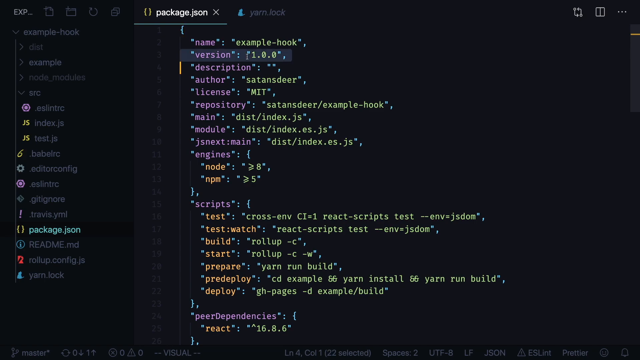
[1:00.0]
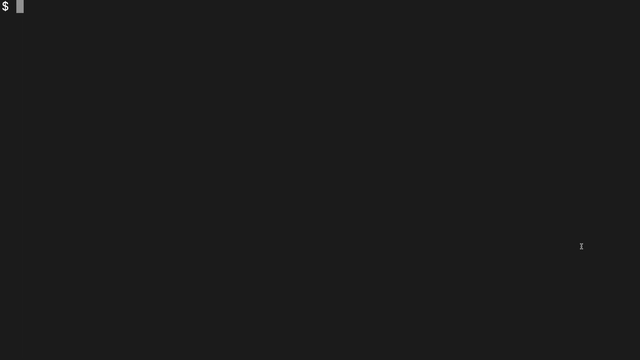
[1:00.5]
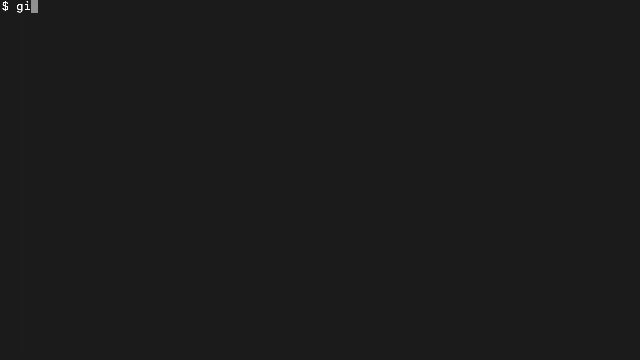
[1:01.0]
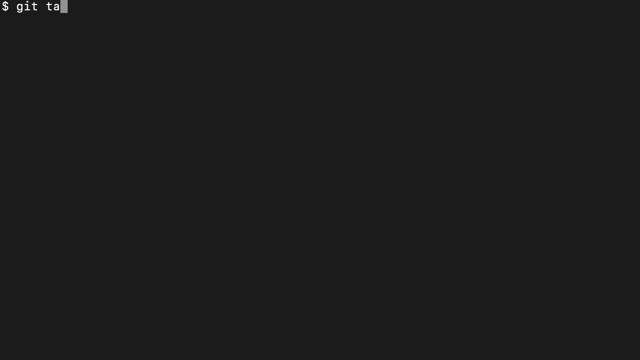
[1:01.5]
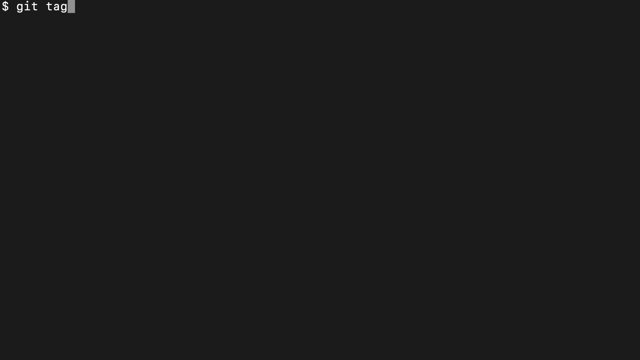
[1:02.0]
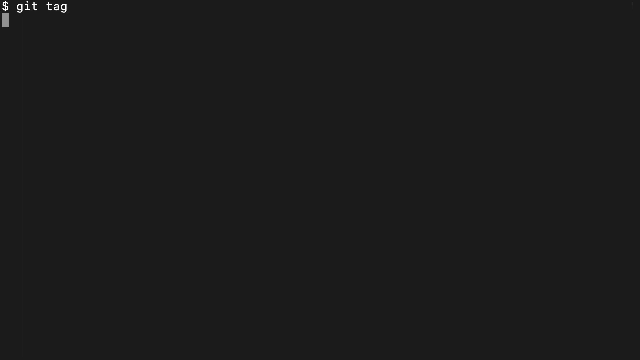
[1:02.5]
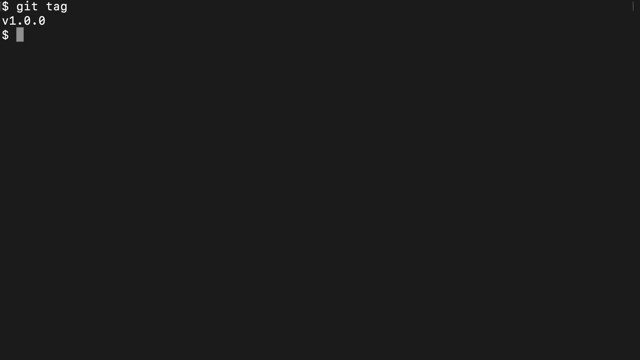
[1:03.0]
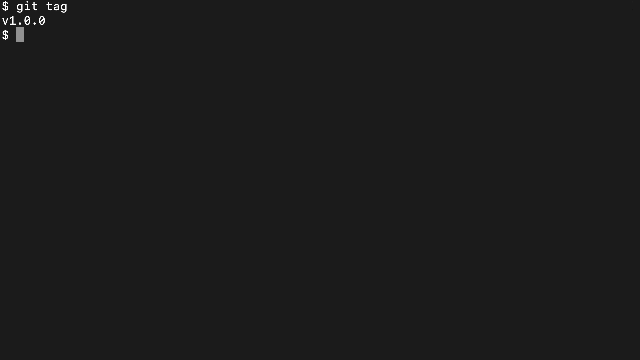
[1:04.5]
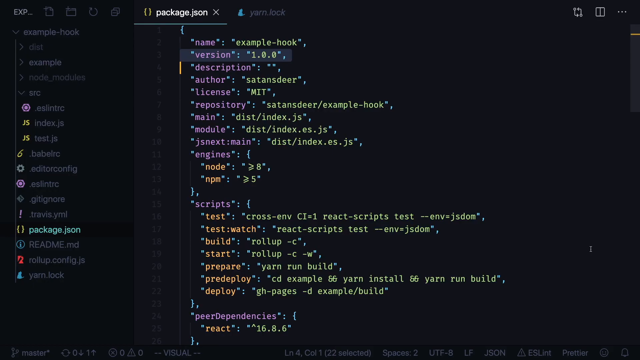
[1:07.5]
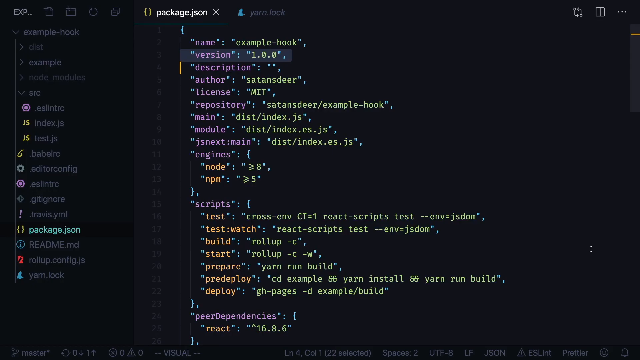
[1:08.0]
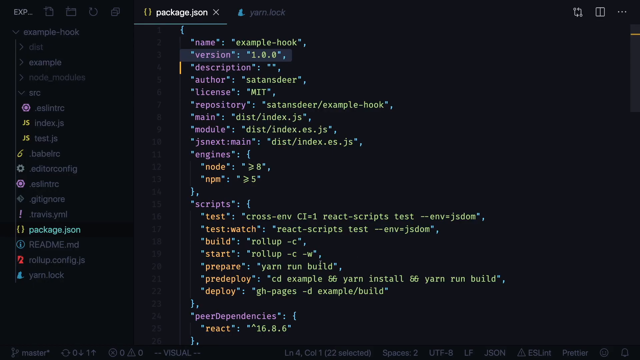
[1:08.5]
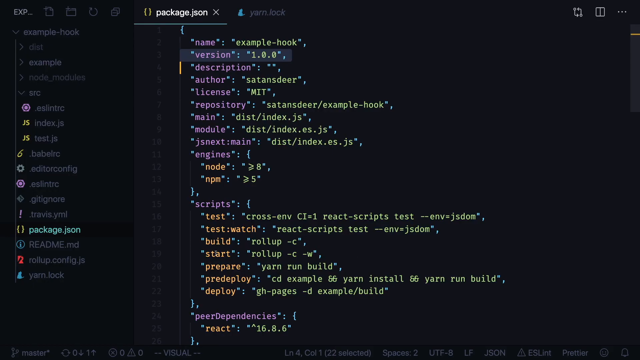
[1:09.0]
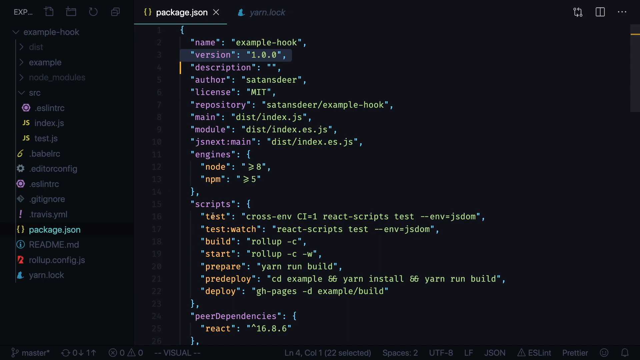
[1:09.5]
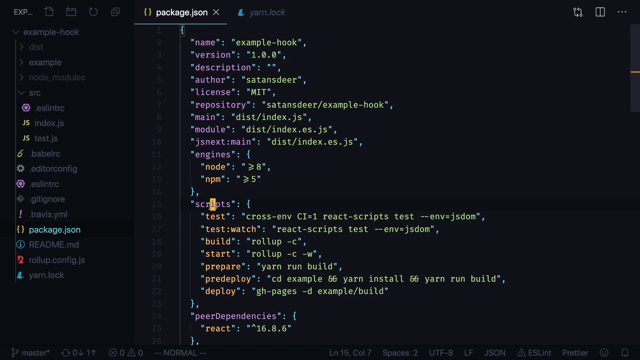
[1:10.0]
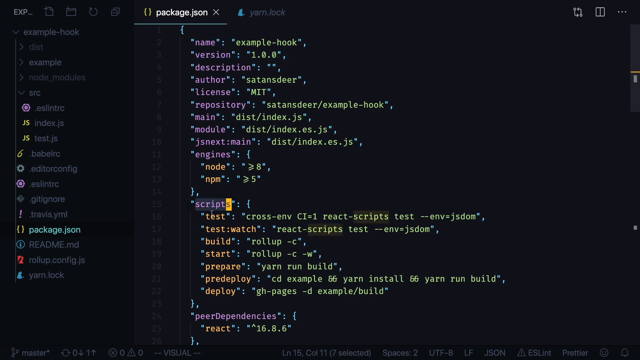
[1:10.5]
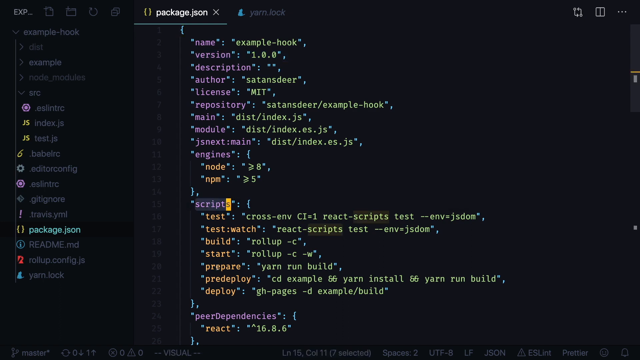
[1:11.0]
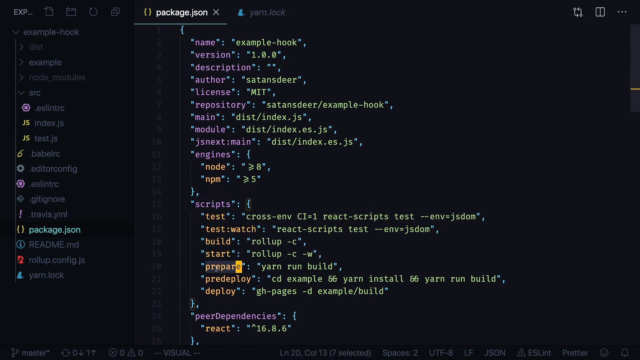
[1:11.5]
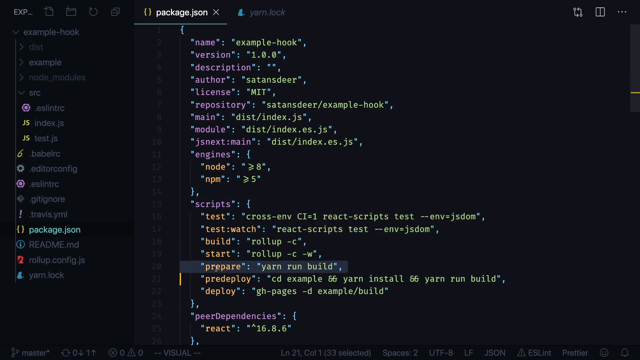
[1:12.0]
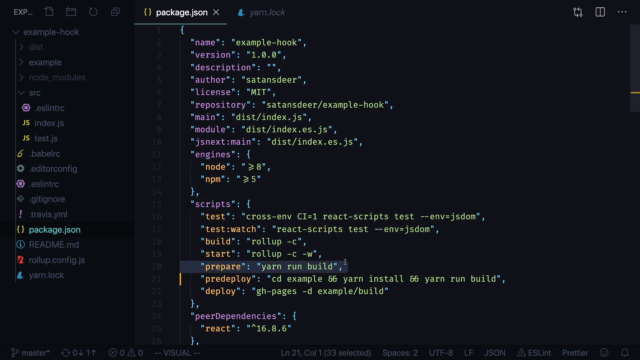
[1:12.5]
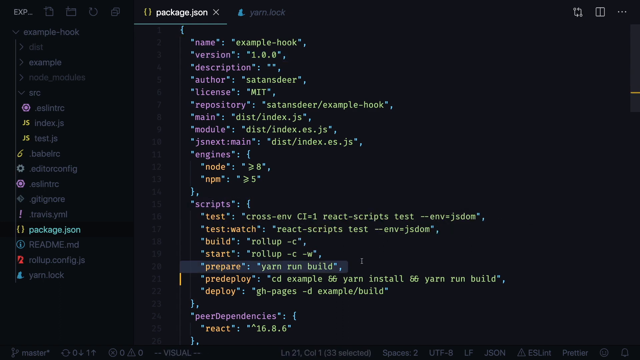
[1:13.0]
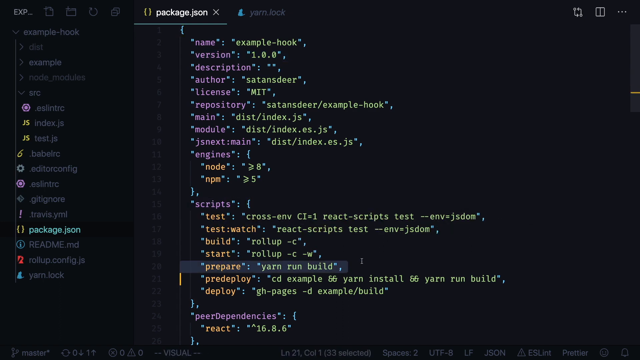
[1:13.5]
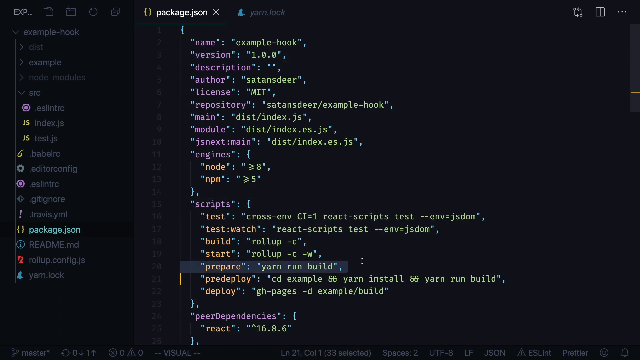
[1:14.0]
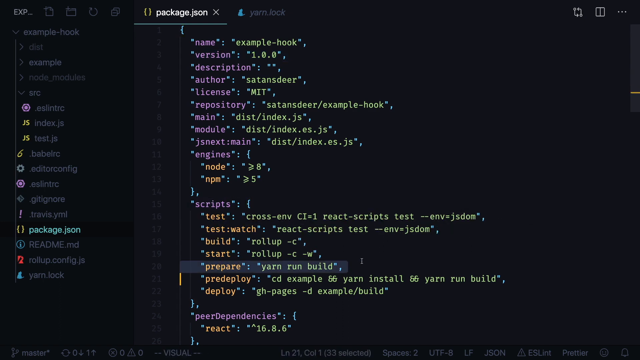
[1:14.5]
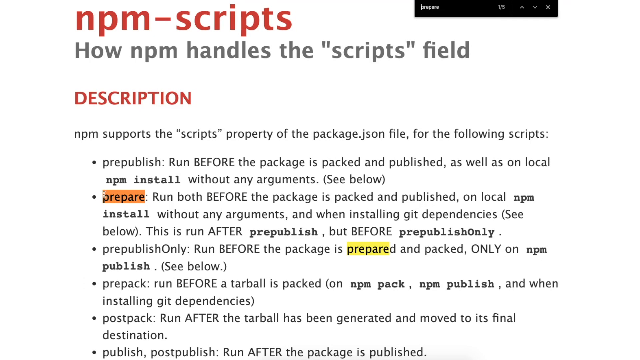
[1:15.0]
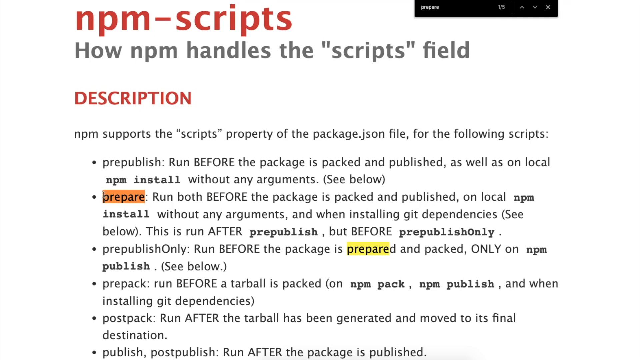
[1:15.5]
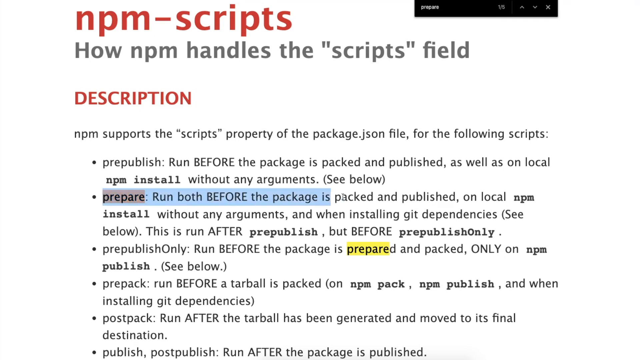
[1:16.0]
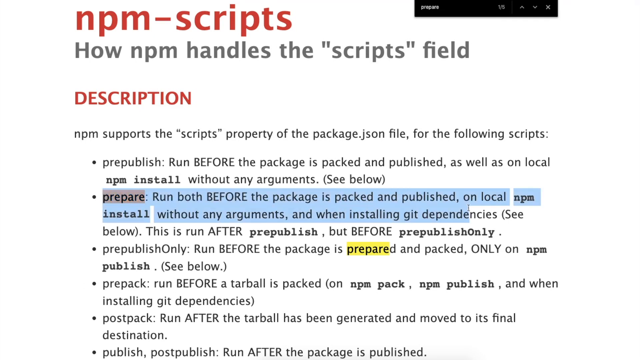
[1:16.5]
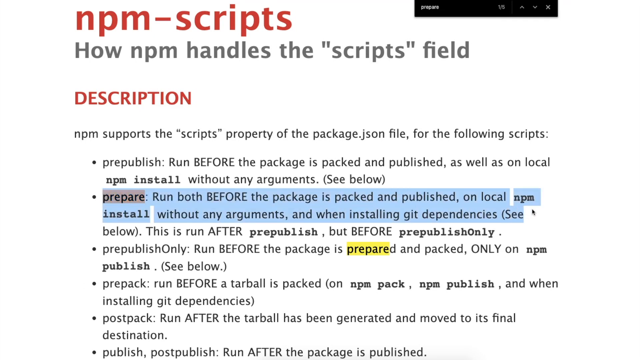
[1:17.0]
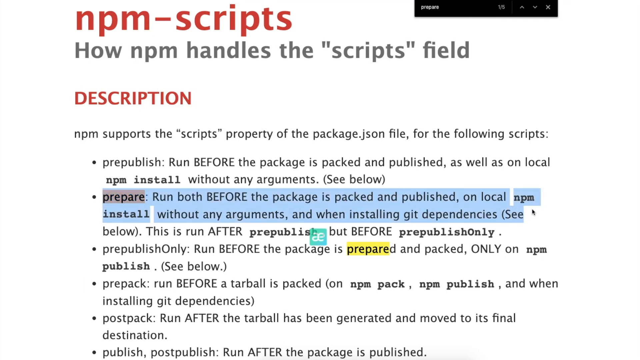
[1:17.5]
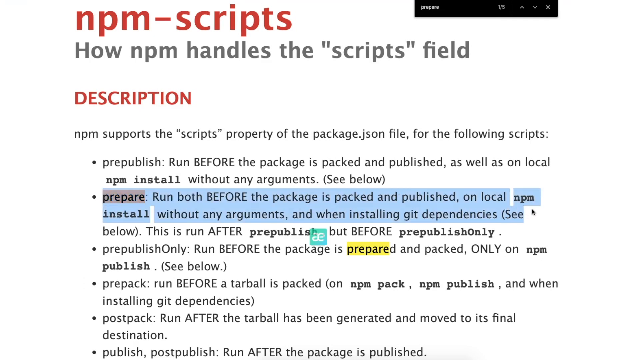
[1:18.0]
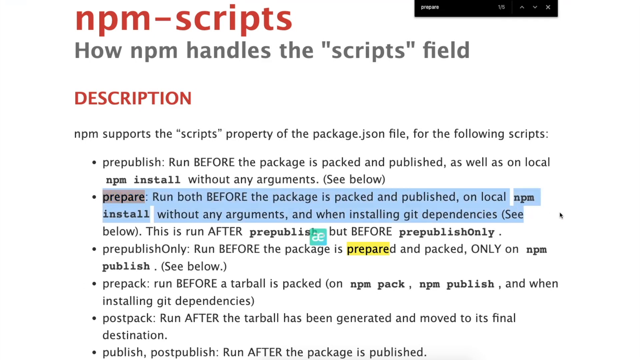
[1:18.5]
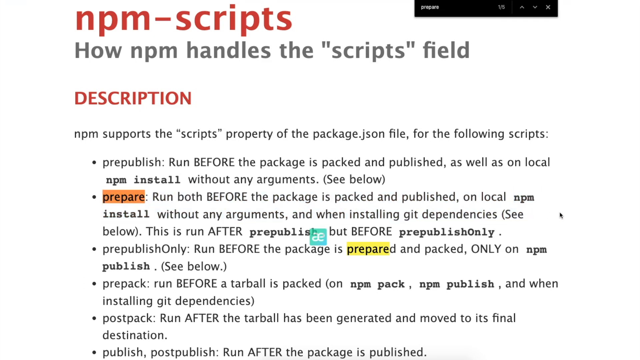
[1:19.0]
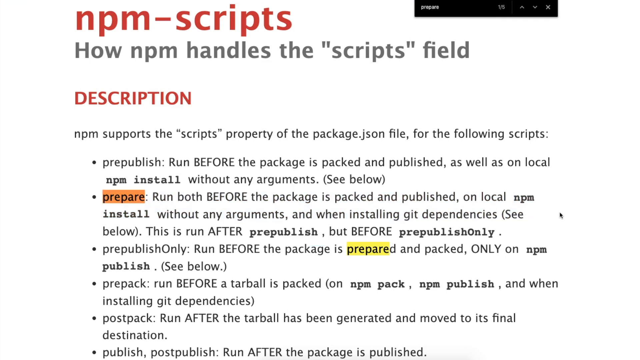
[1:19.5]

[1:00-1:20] On a black screen, white text is typed from left to right in the top left corner: "$ git tag", then underneath "v1.0.0", then a dollar sign. The video returns to the code screen full of purple, green and orange text, with the drop-down menu of grey text on the left and white text at the top reading "package.json"; the user clicks on different lines with the mouse. Next comes a white screen with some red text and mostly black text. In red is "npm-scripts", with grey text underneath: "how npm handles the scripts field". Then in red, "description", followed by "npm supports the scripts property of the package.json file for the following scripts" and a bulleted list. Bullet 1: "pre-publish run before package is packed and published as well as on local npm install without any arguments". Bullet 2: "prepare run both before the package is packed and published on local npm install without any arguments when installing git dependencies. This is run after pre-publish but before pre-publish only". Bullet 3: "pre-publish only, run before the package is prepared and packed only on npm publish, see below". Bullet 4: "pre-pack run before a tarball is packed on npm pack, npm publish and when installing git dependencies". Bullet 5: "post-pack, run after the tarball has been generated and moved to its final destination". The word "prepare" in bullets 2 and 3 is highlighted in yellow, maybe as part of a search feature, though it is unclear. The text of bullet 2 is then highlighted in blue, and when the user clicks off, it goes back to white.